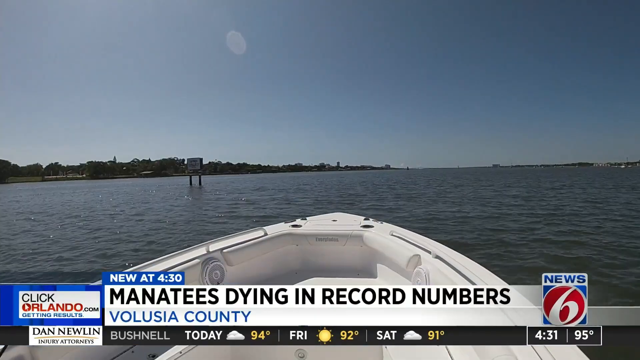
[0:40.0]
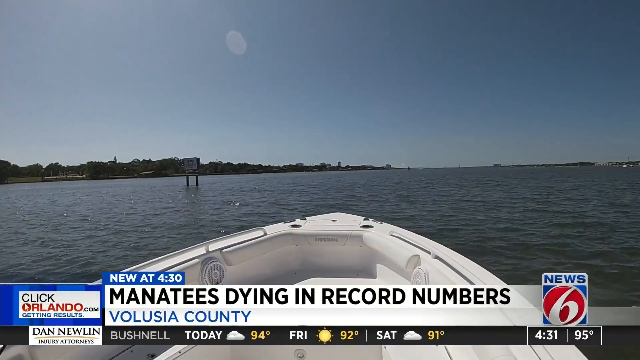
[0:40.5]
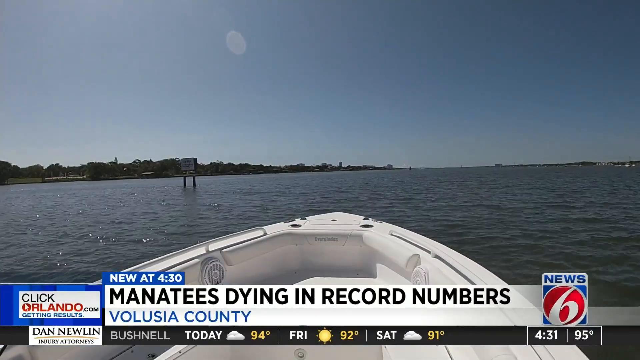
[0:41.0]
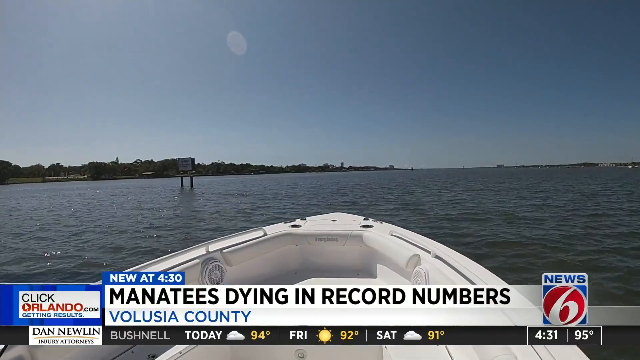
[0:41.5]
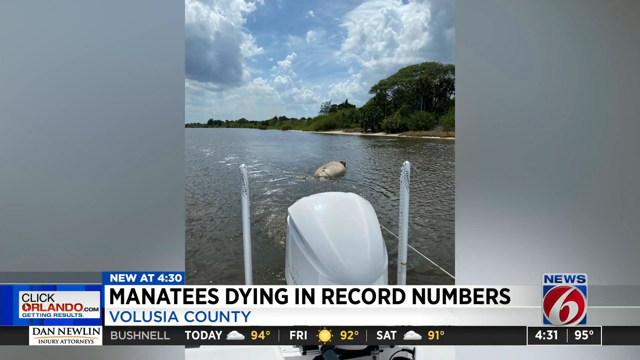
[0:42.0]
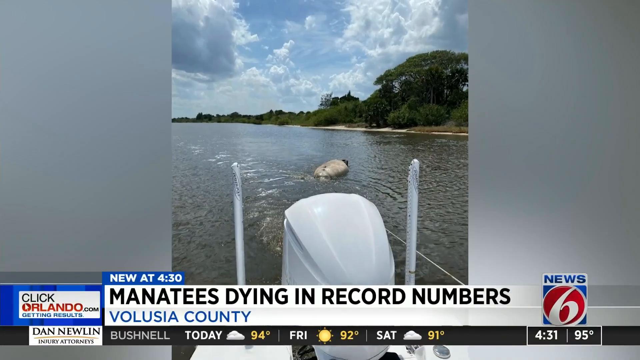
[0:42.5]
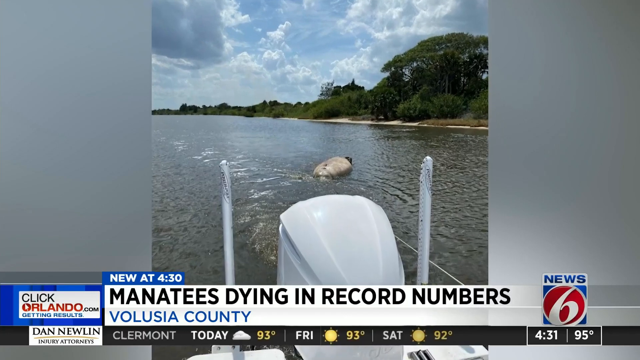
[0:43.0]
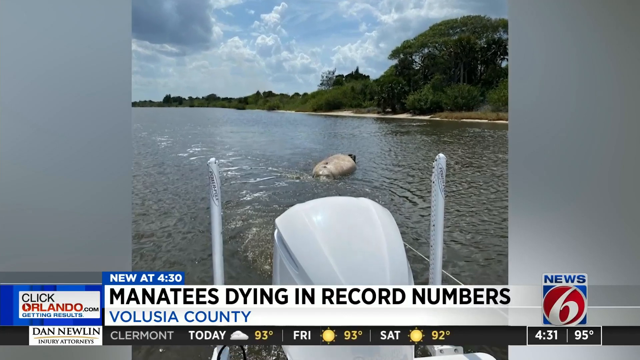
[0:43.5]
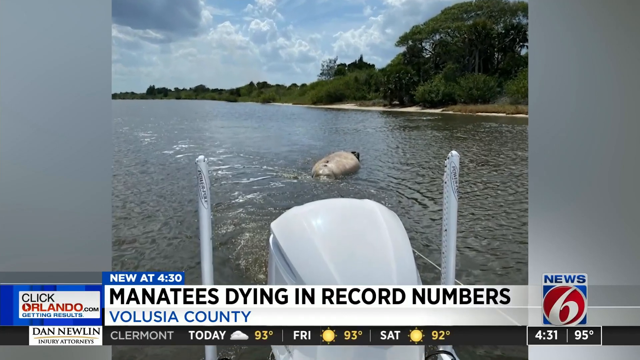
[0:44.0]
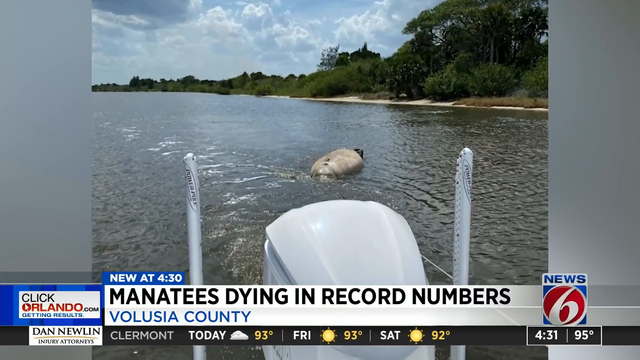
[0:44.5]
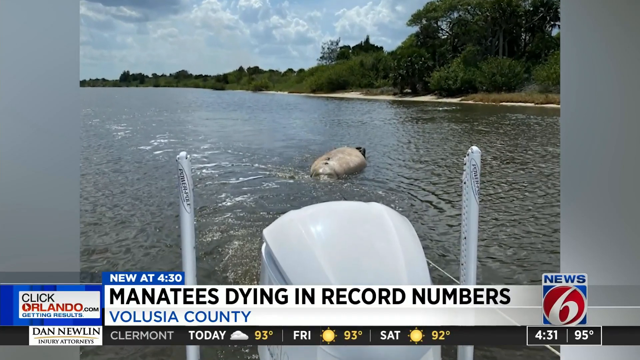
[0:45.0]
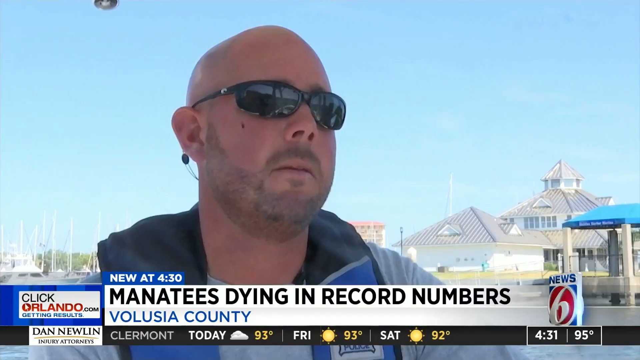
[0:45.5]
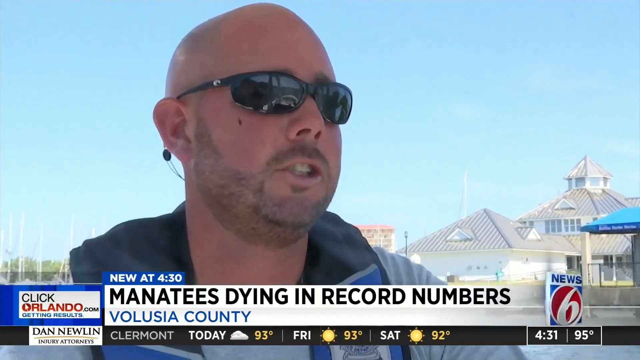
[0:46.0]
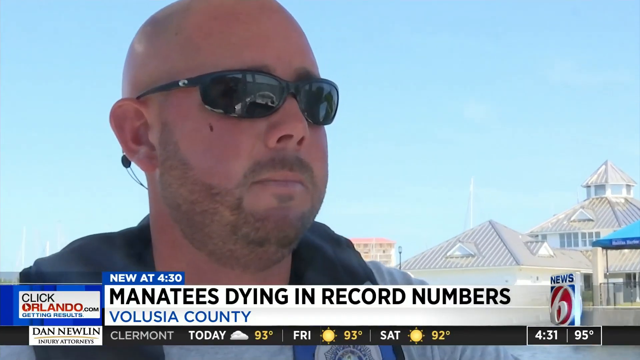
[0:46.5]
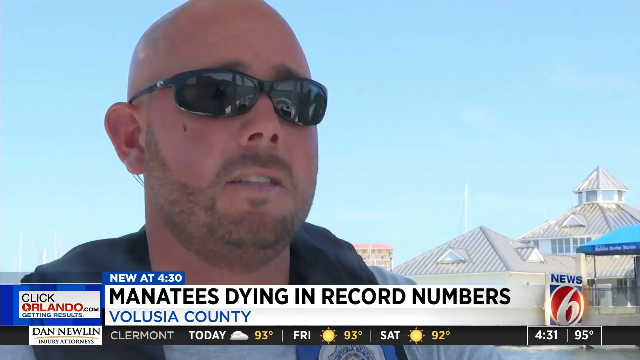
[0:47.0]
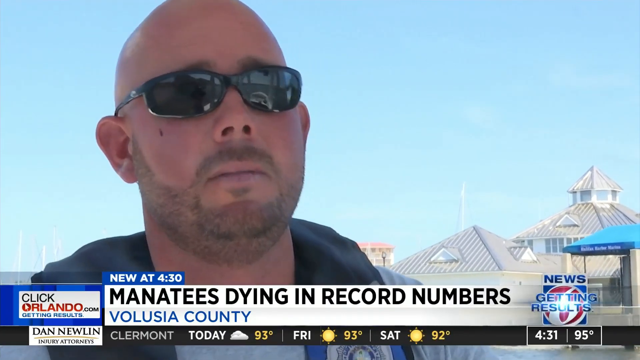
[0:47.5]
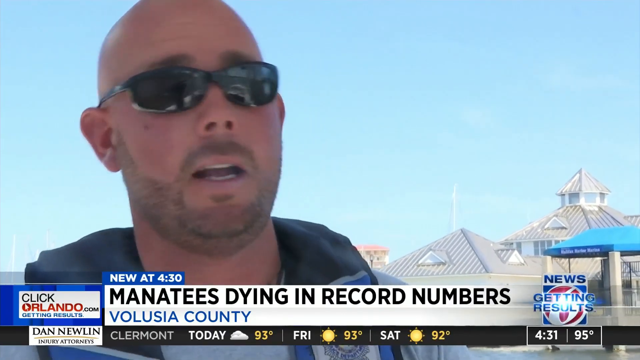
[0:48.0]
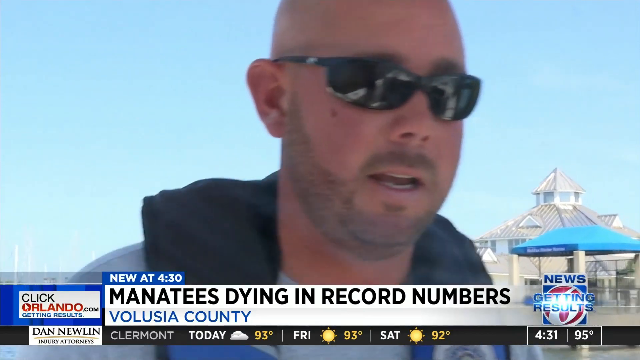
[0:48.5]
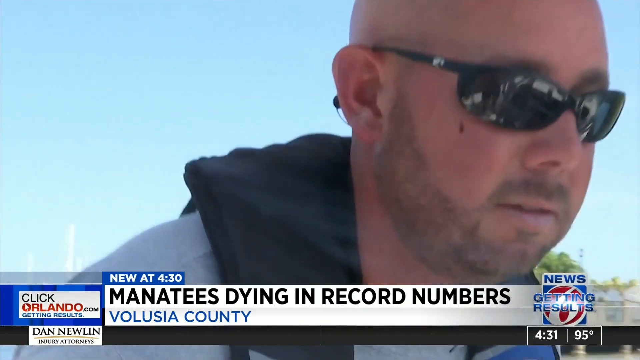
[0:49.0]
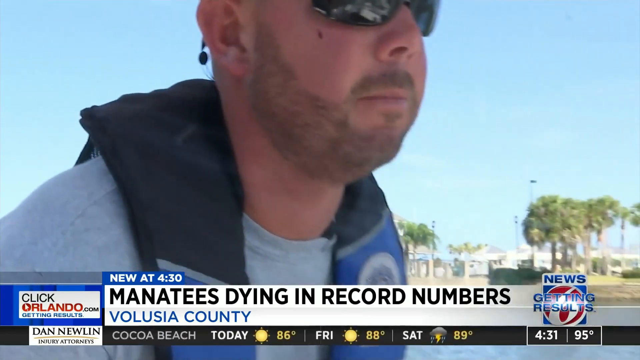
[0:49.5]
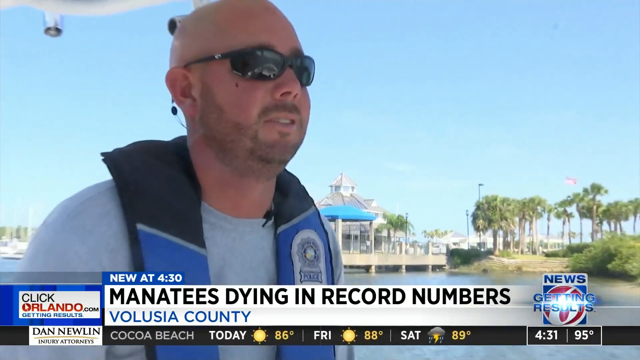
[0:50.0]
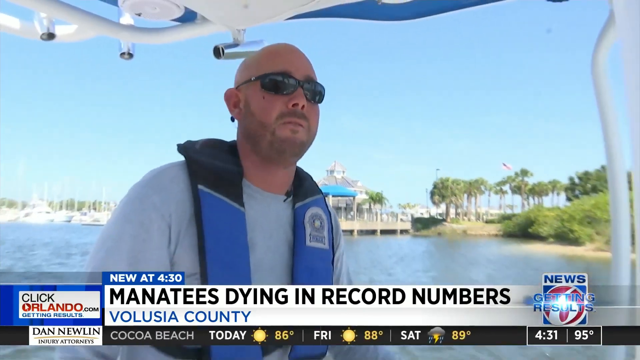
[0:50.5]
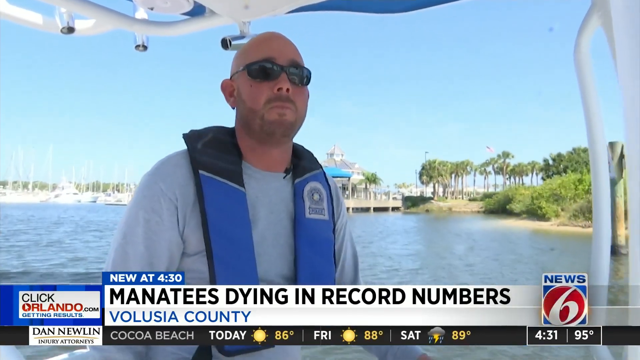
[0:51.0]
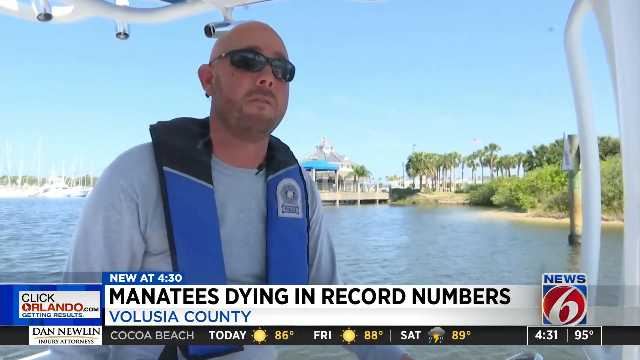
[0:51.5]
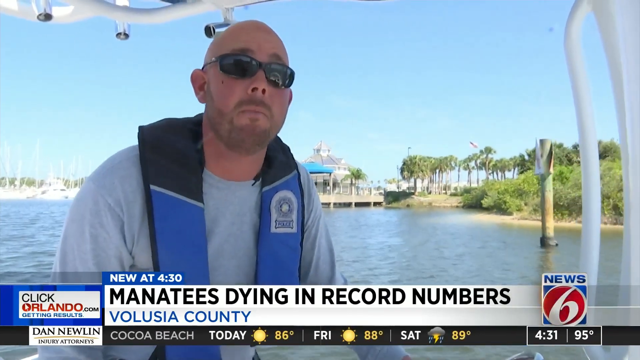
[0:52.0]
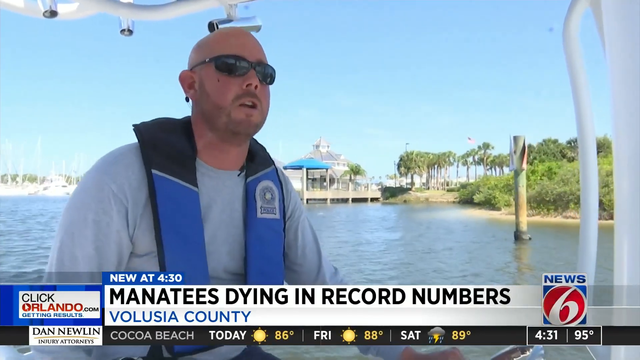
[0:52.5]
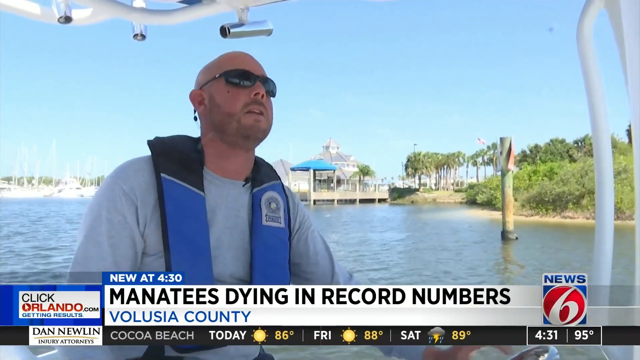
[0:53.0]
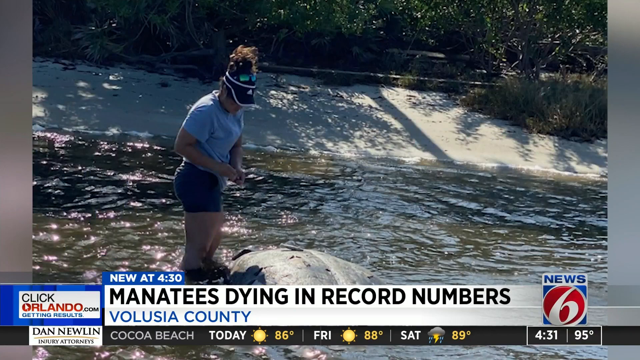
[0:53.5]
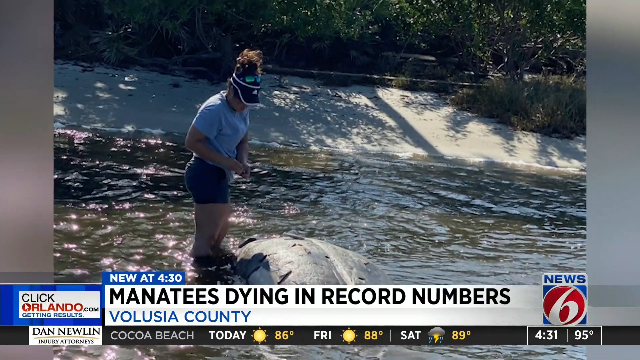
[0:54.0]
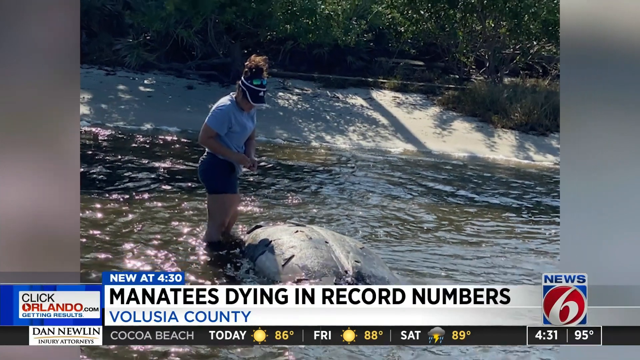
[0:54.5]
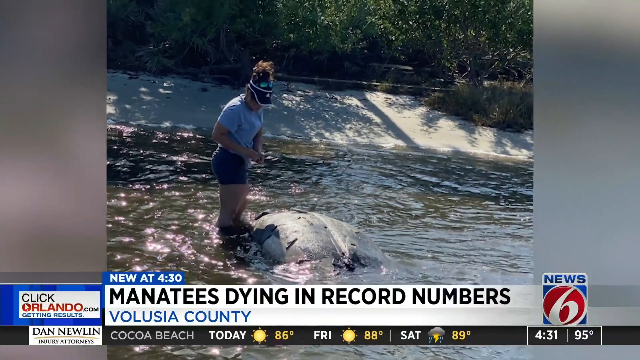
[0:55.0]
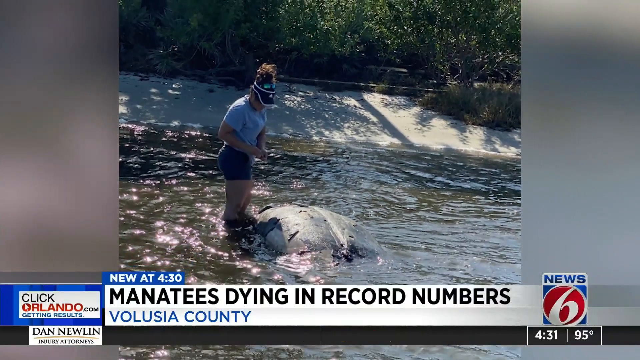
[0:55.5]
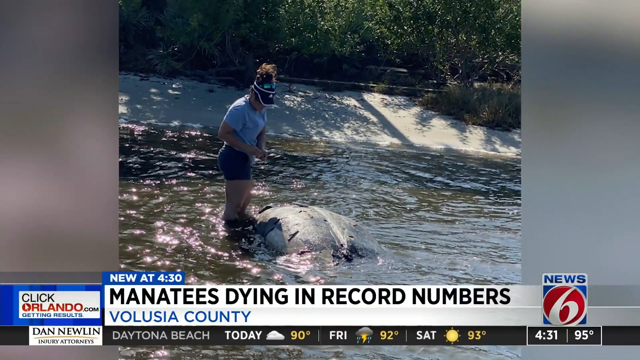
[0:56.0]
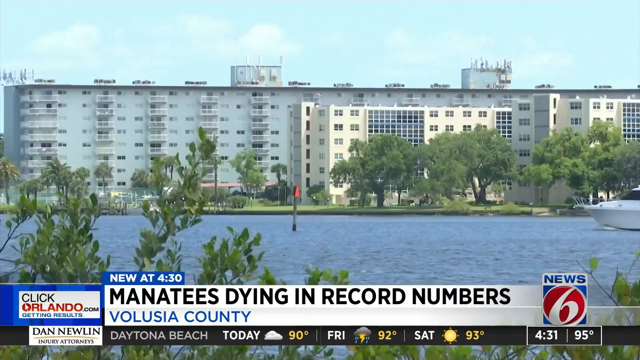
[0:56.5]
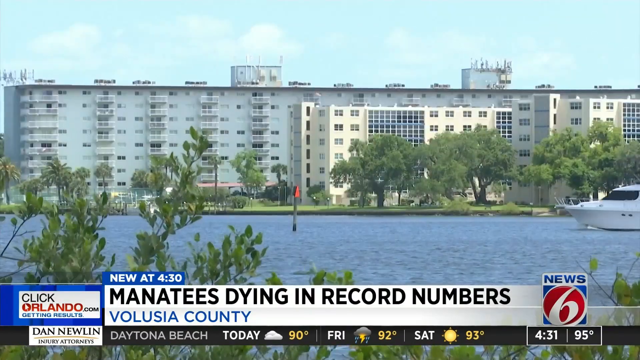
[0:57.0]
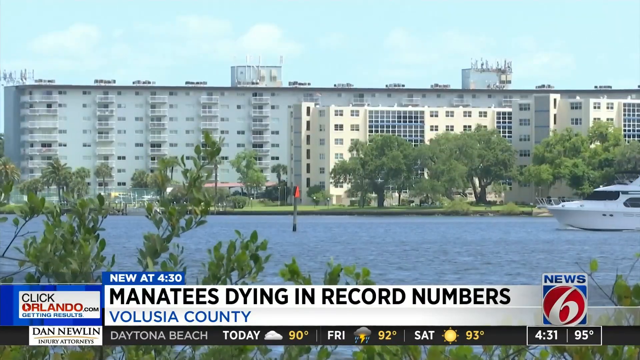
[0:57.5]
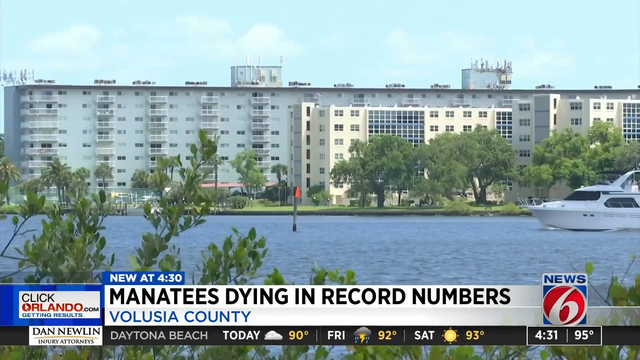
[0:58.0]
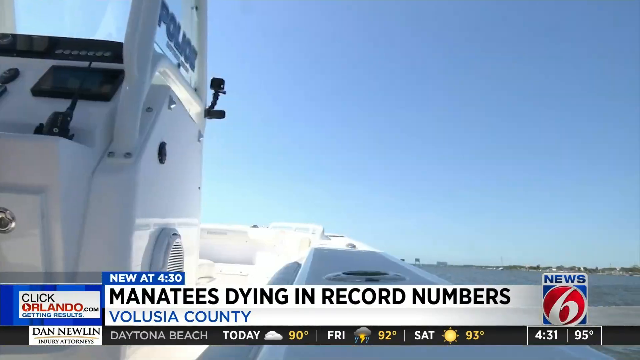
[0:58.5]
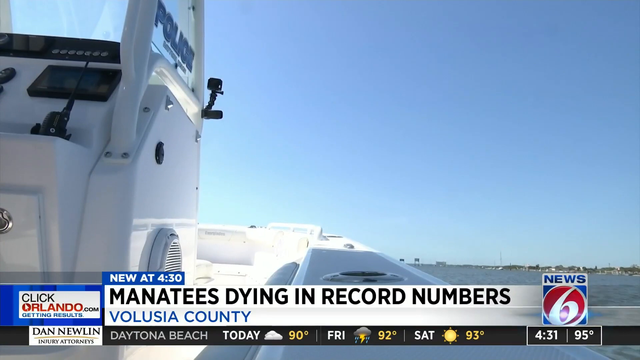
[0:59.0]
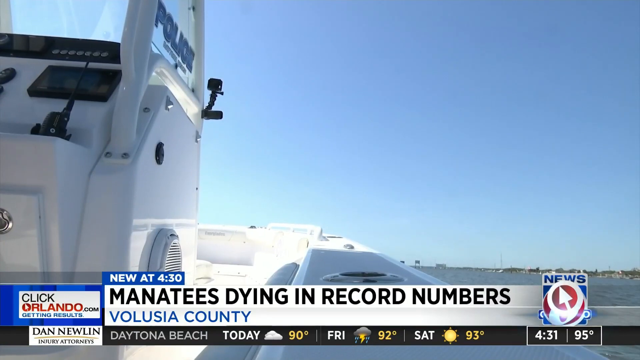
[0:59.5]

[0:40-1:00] A police boat is driven by a bald white policeman with a beard and sunglasses, wearing a life jacket; he appears to be driving around on a lake or the ocean. The report concerns manatees dying in record numbers in Volusia County. To the side, an image of a dead manatee appears. The officer speaks further to the cameras as the shot zooms in and zooms back out. Another image shows a dead manatee with a woman standing above it, wearing a blue visor and a blue outfit, presumably a worker of some kind. She looks down at the manatee, which appears to have been dead for a while judging by the state of the corpse. This location appears to be a bay or a spot shaded by trees, closer to a shore rather than out in the open ocean. Both images seem to have been taken in similar places in Florida, or at least in the same county.